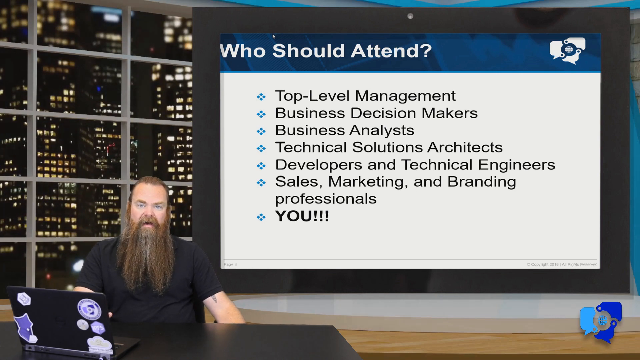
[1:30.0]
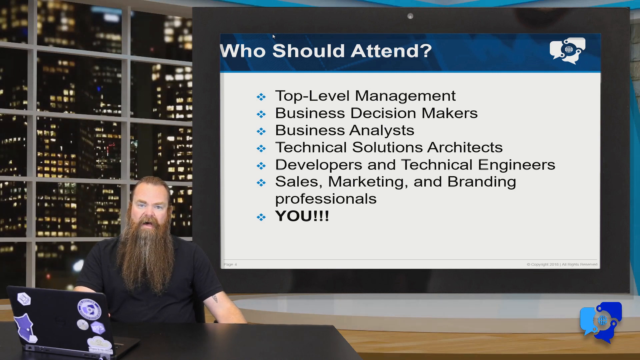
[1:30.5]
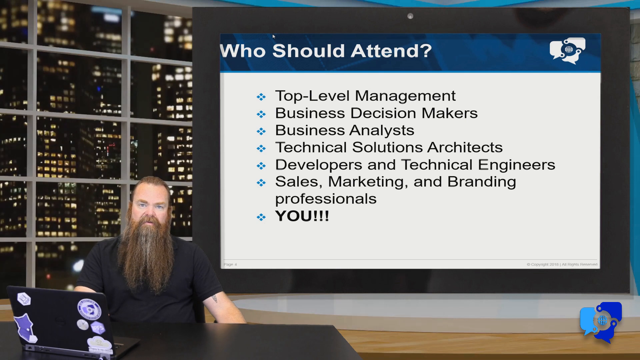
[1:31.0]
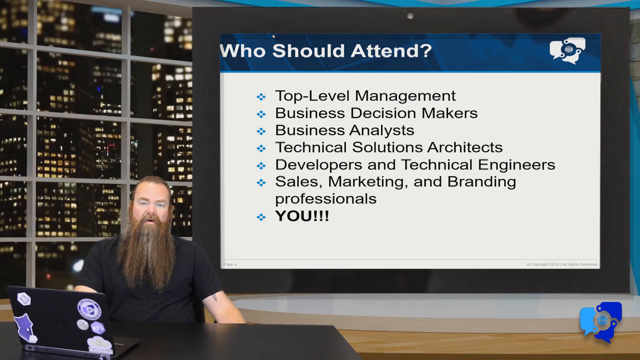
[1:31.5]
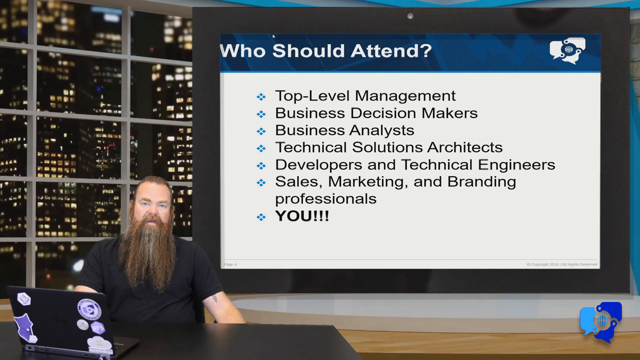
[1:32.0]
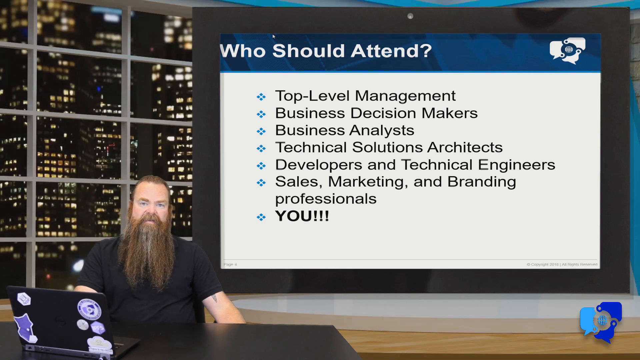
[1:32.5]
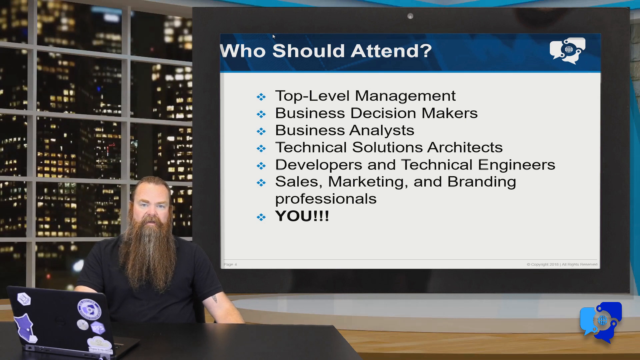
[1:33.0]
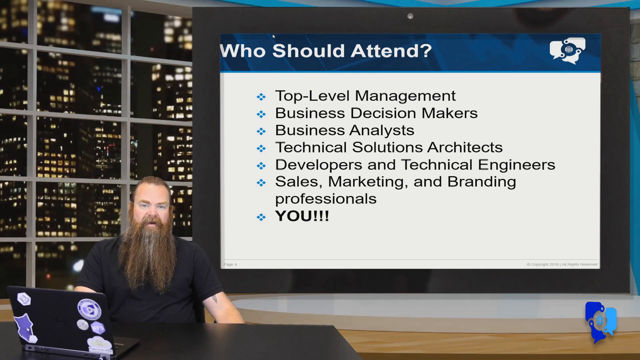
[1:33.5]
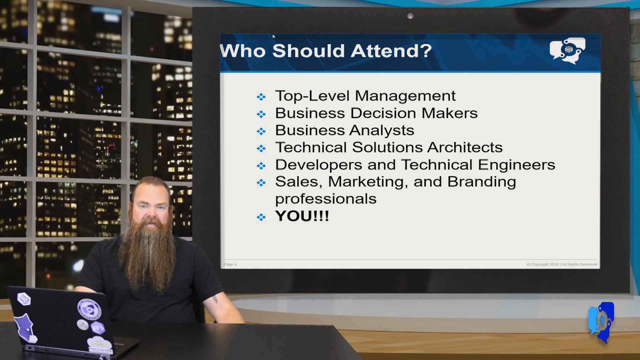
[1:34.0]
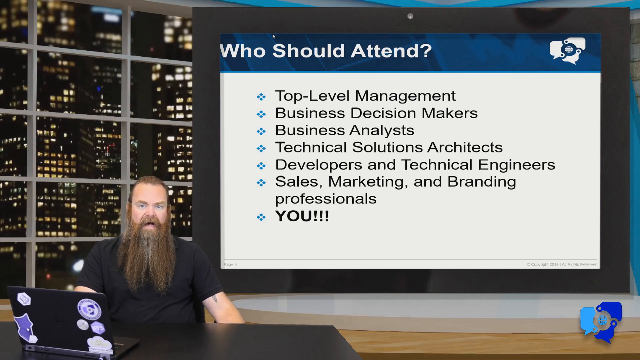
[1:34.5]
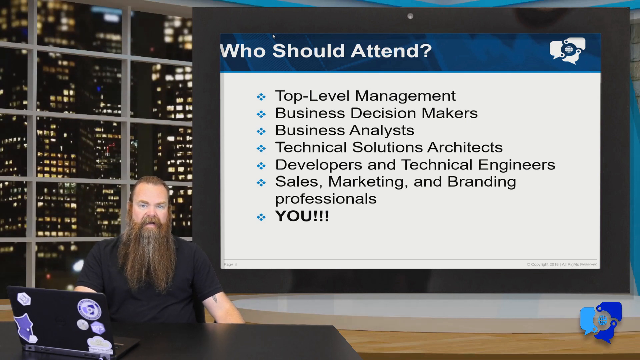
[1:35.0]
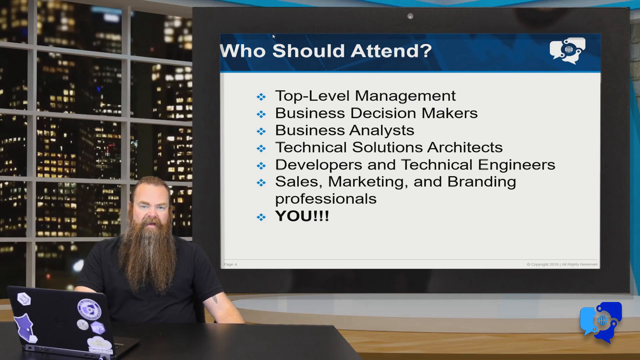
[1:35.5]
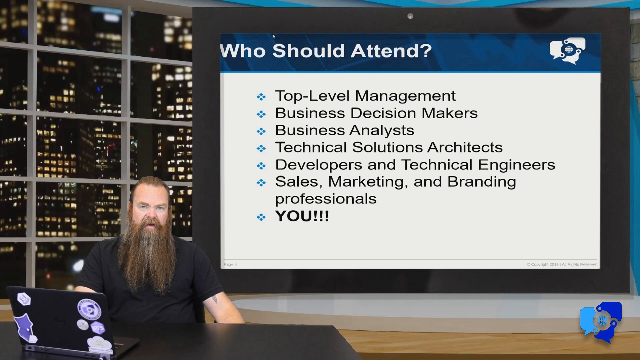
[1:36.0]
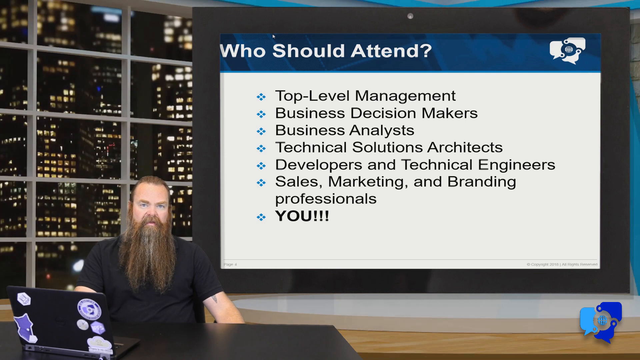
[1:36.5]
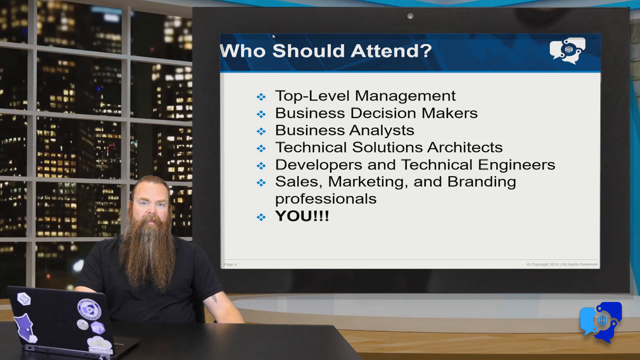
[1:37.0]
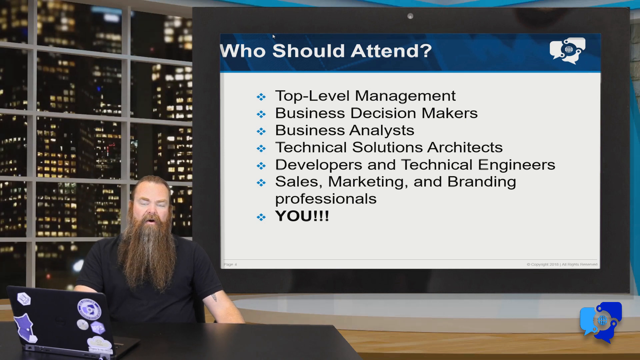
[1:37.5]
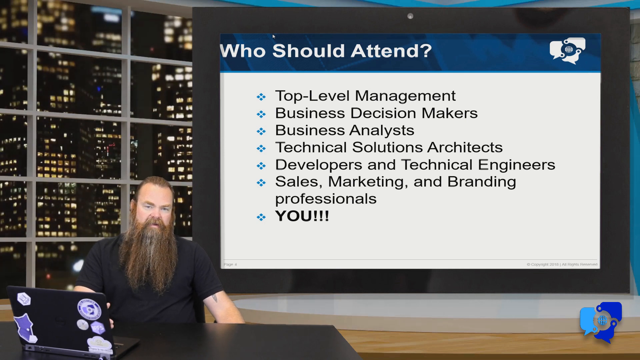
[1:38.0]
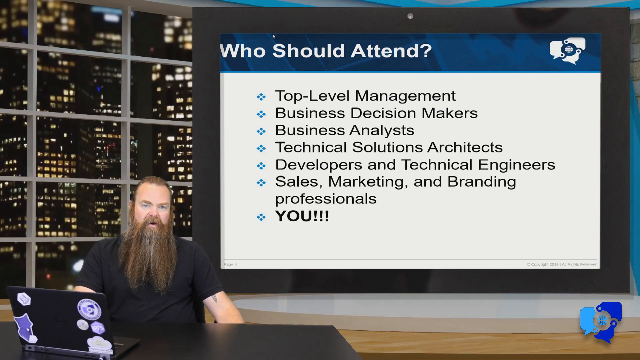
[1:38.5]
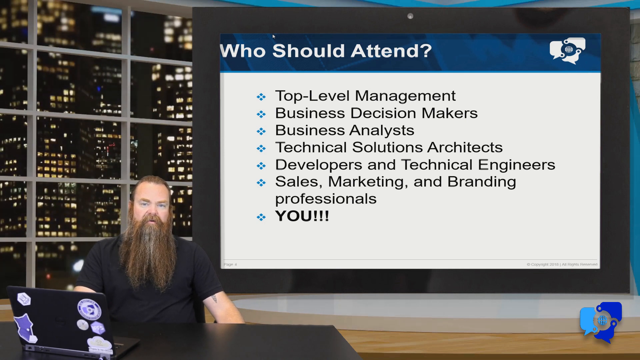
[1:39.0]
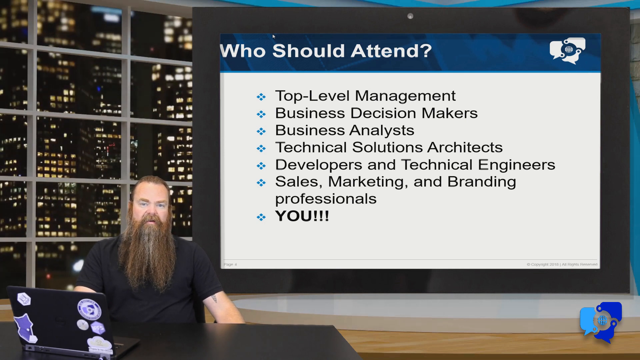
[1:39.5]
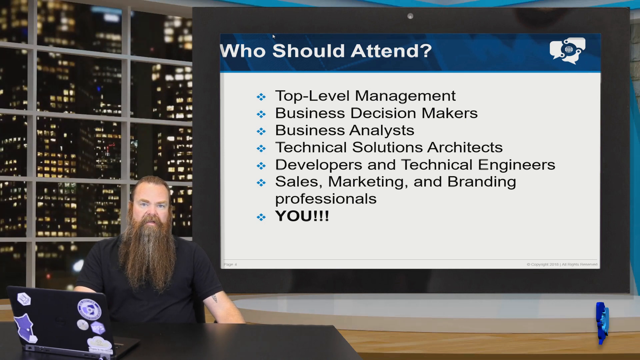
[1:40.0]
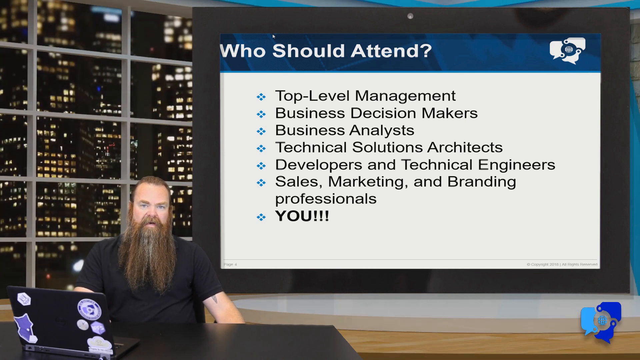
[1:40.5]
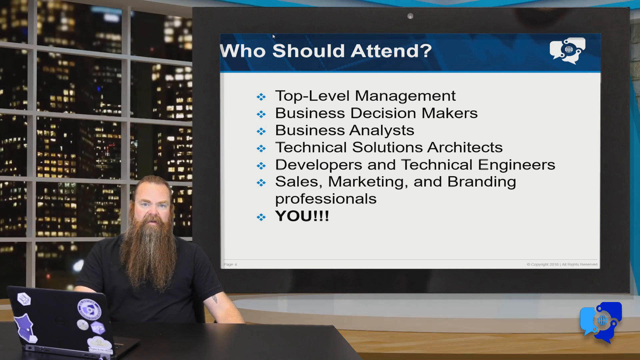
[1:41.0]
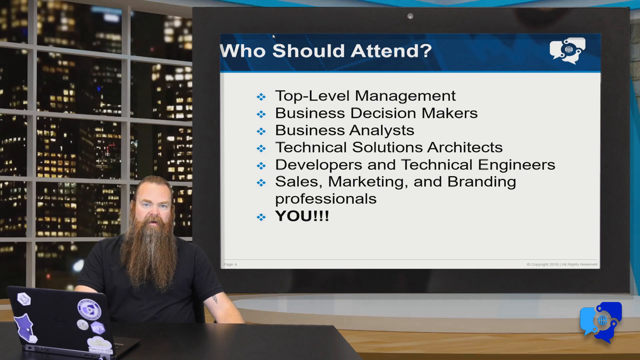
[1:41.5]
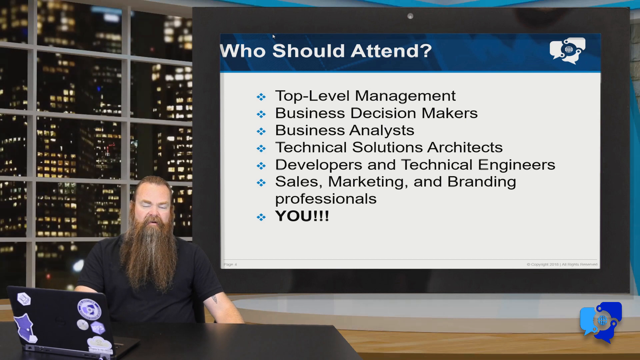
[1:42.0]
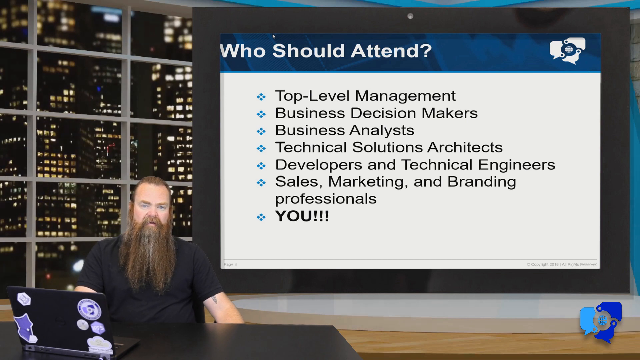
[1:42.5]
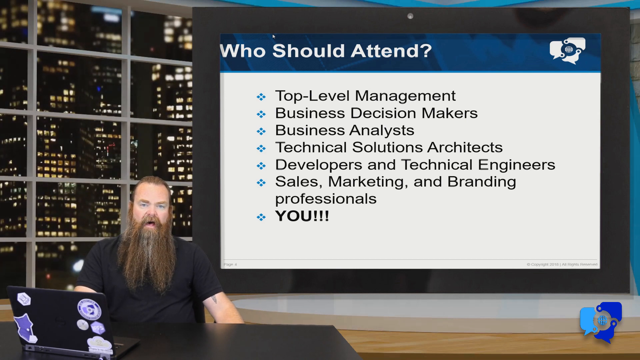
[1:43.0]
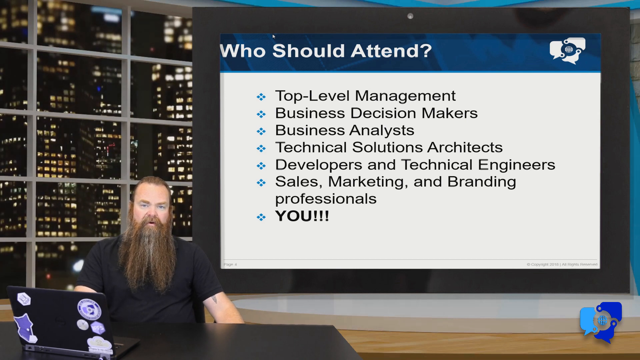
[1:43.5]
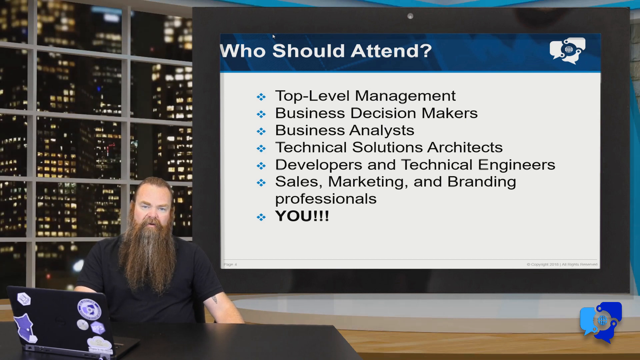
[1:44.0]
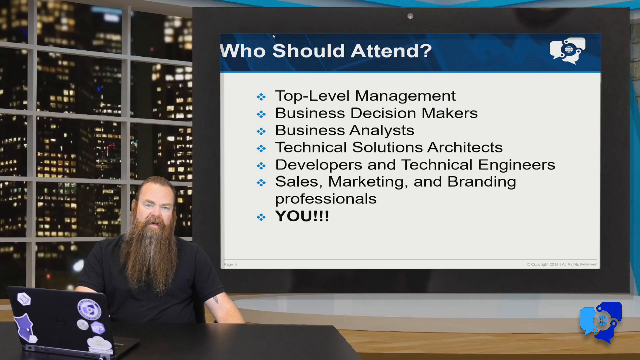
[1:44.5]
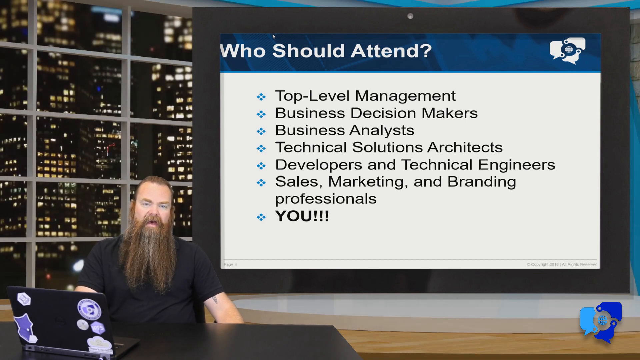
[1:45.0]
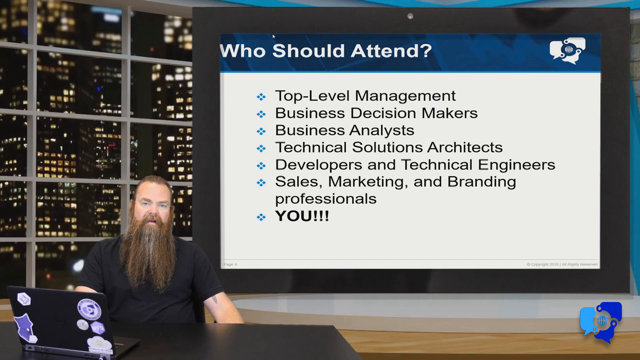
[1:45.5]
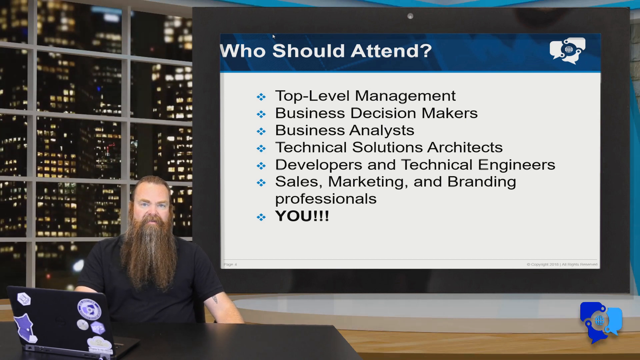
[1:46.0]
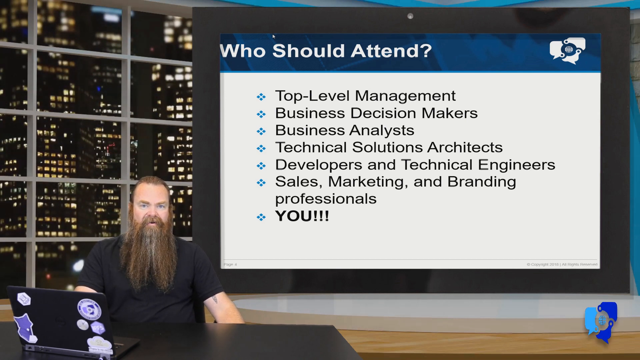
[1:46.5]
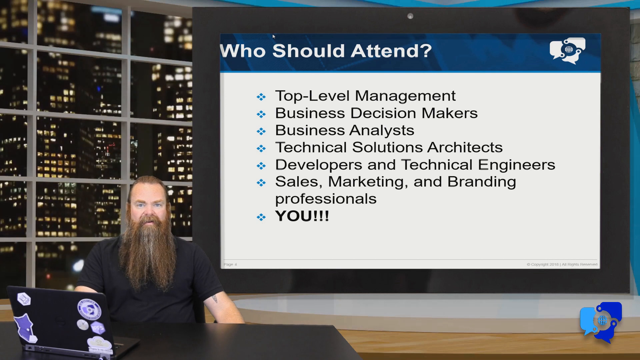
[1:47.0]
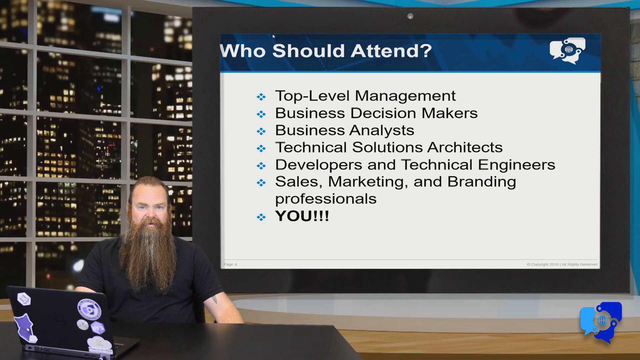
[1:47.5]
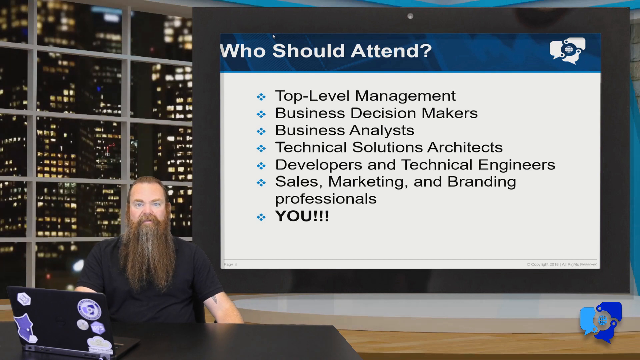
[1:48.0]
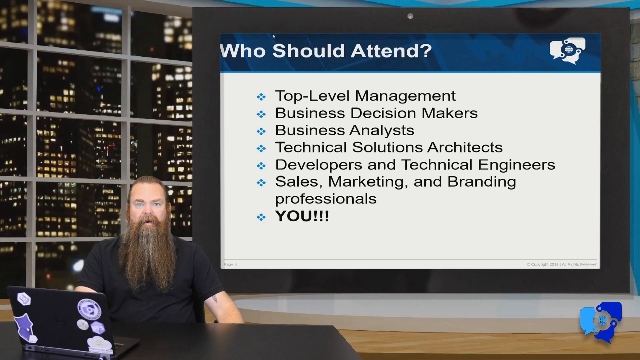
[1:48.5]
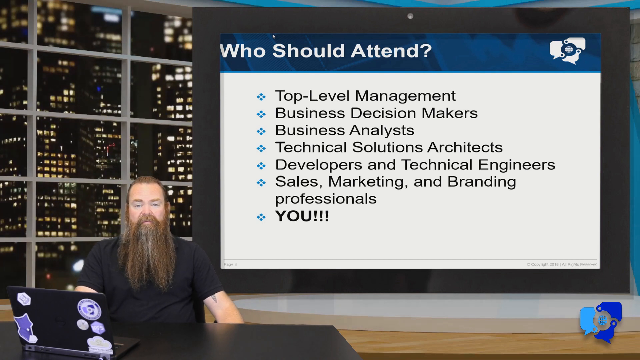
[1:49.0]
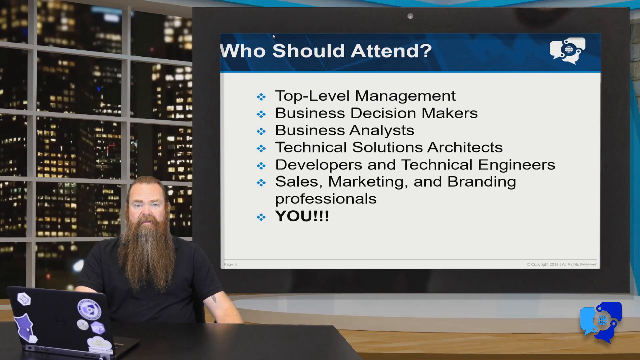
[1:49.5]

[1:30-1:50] On the left is a large backdrop of an open-window view of skyscrapers. In front of it is a long-haired man with his hair pulled back in a ponytail, a full mustache and a full beard that is quite long, probably 9 to 10 inches. He wears a plain black short-sleeved t-shirt and is sitting in front of a laptop with stickers all over it. On the right of the screen, a message reads "Who should attend this meeting?" and lists management, decision-makers, business analysts, solutions architects, developers, engineers, marketers, branding professionals, and you.